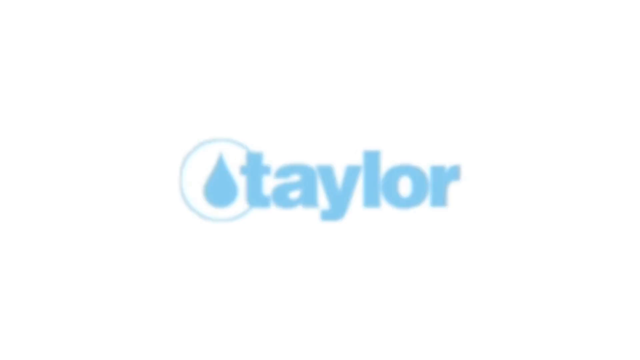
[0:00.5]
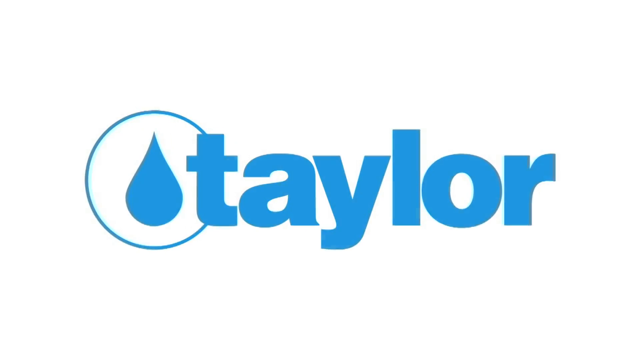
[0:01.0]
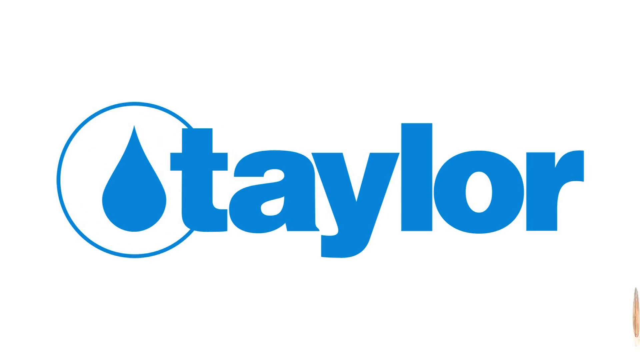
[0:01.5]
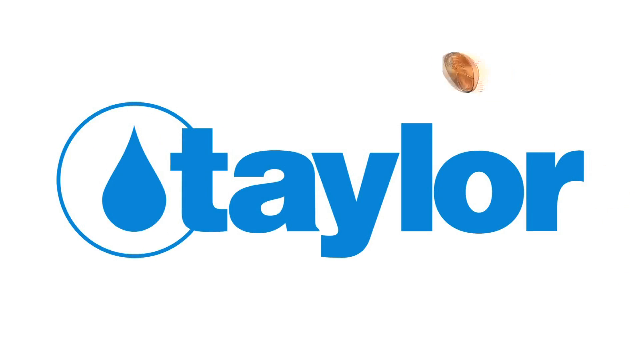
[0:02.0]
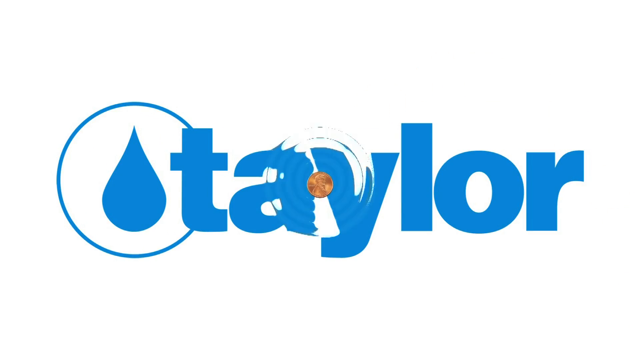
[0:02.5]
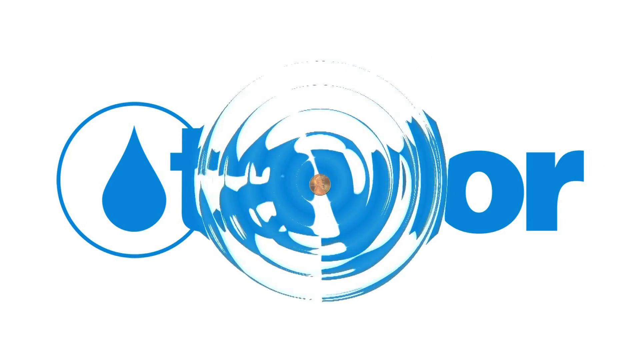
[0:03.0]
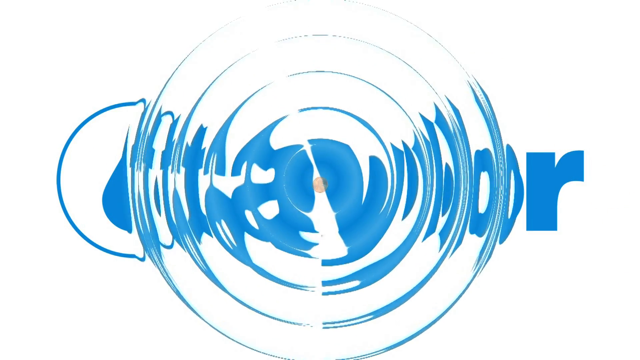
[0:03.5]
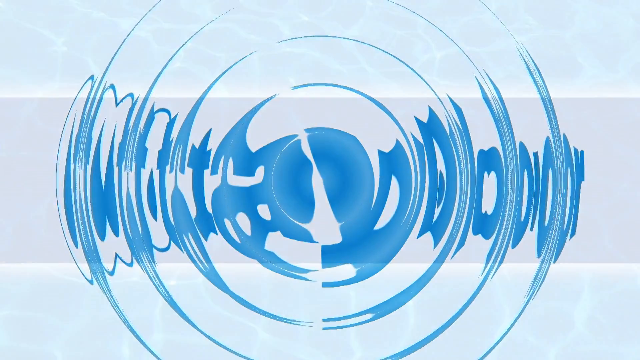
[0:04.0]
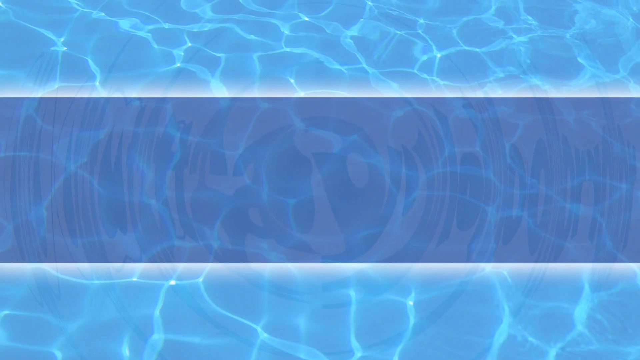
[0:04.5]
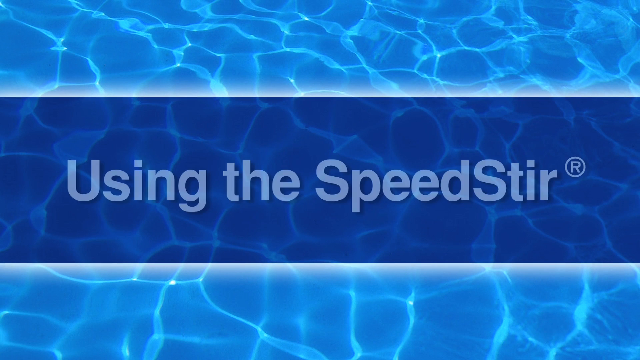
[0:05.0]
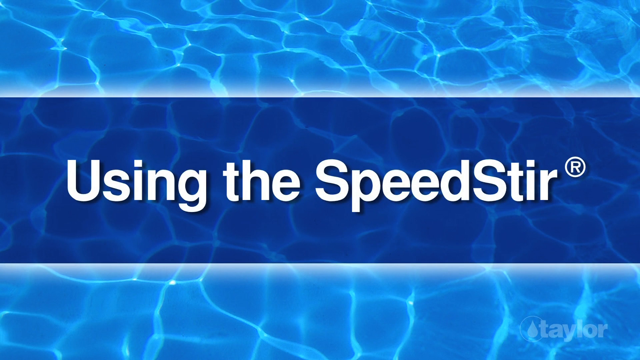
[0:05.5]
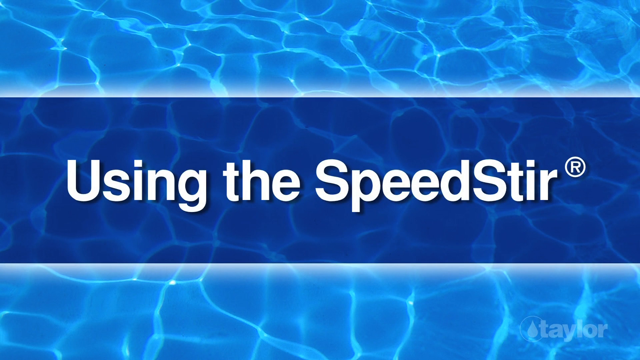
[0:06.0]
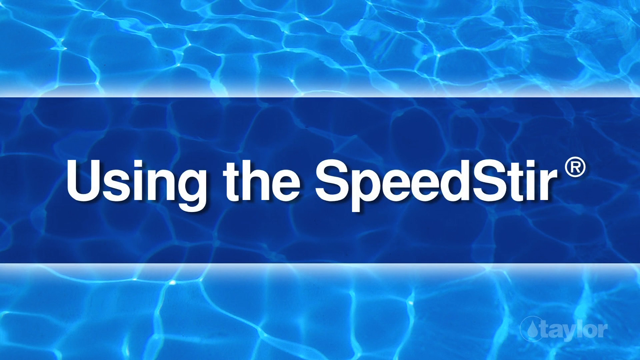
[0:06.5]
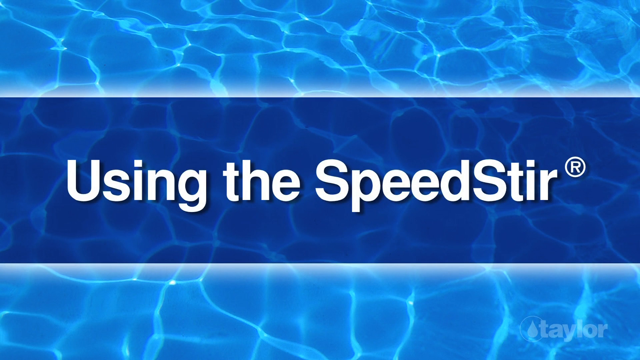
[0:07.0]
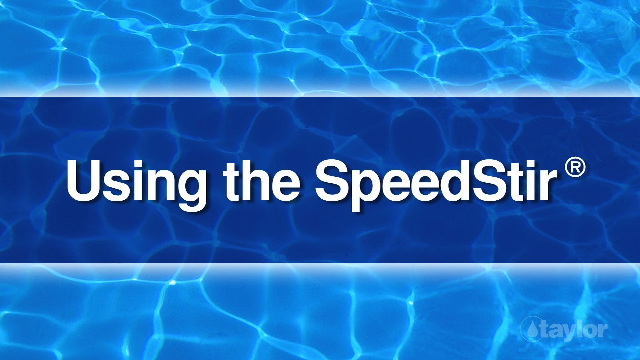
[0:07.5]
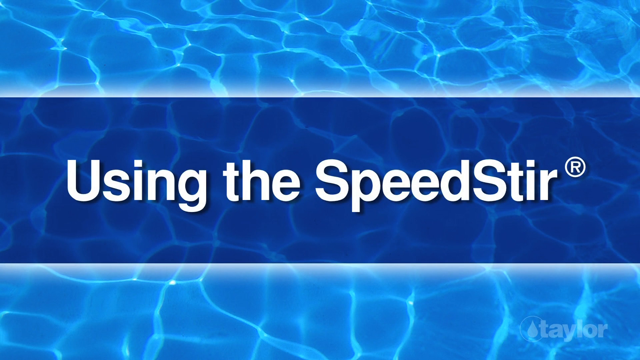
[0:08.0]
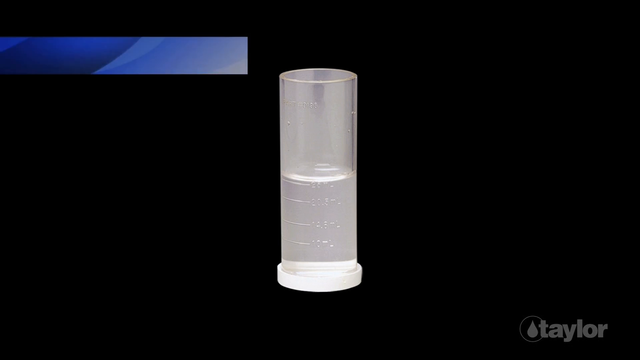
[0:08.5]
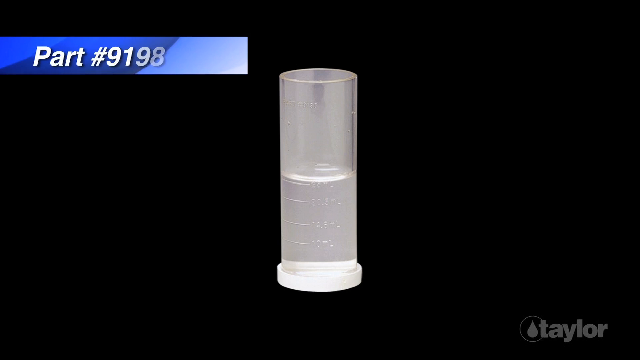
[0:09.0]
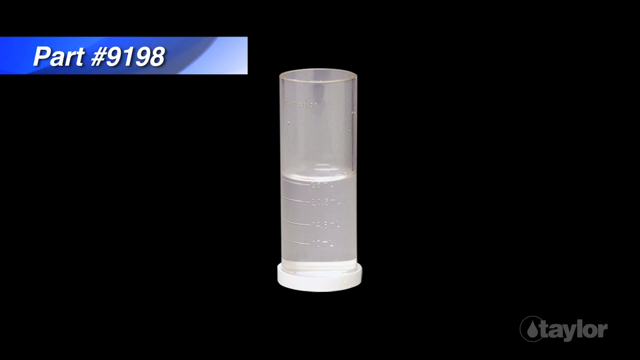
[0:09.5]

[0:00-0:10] On a white background, the word "taylor" in blue lowercase letters comes in from the center and grows bigger and bigger. To its left is a small blue teardrop with a circle around it. The lettering is bold, blue and sans serif. A copper penny comes in from the right side and lands between the "a" and the "y", looking as if it lands in a puddle of water, and ripples spread out and cover the whole logo. The scene then switches to another graphic with bold, white, sans-serif text reading "Using the SpeedStir" followed by a registered trademark symbol; SpeedStir is written as one word with both S's capitalized. The text is in a blue banner whose top and bottom are lighter blue. Water ripples are in the background, giving the whole image a white, veiny look, like looking into a swimming pool.